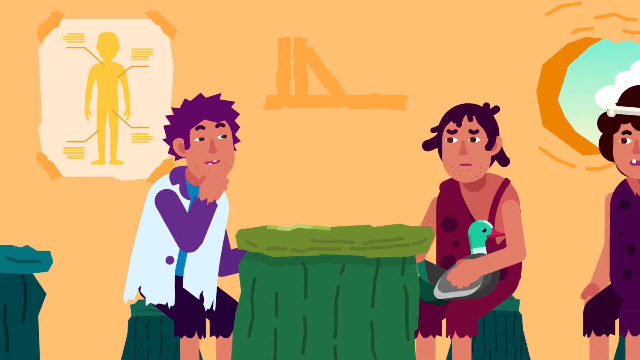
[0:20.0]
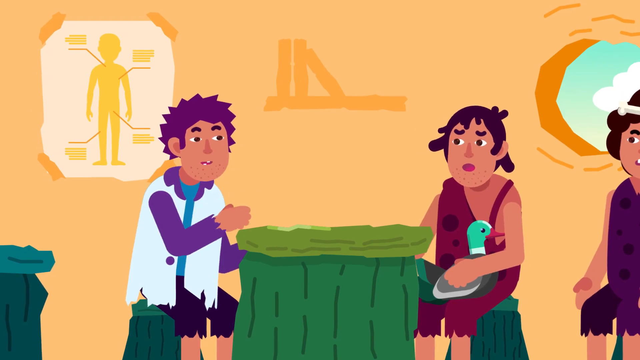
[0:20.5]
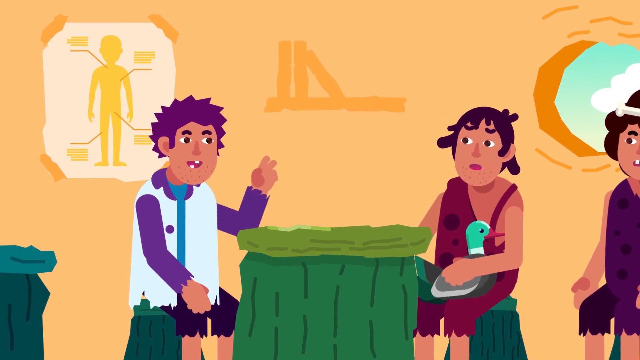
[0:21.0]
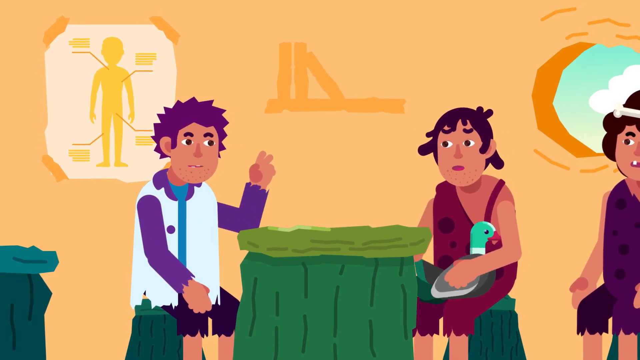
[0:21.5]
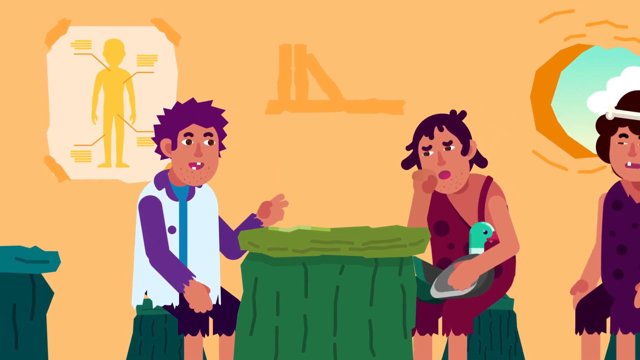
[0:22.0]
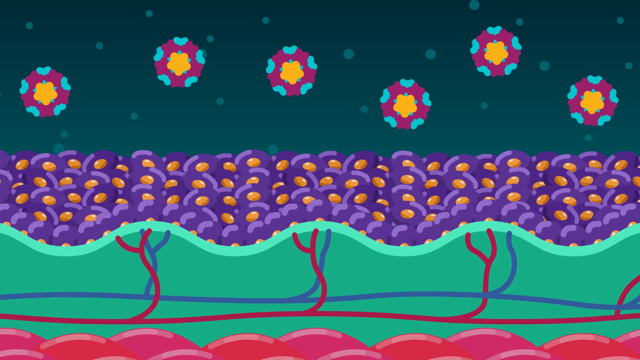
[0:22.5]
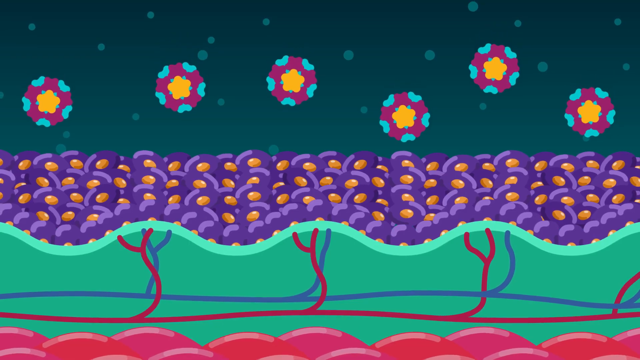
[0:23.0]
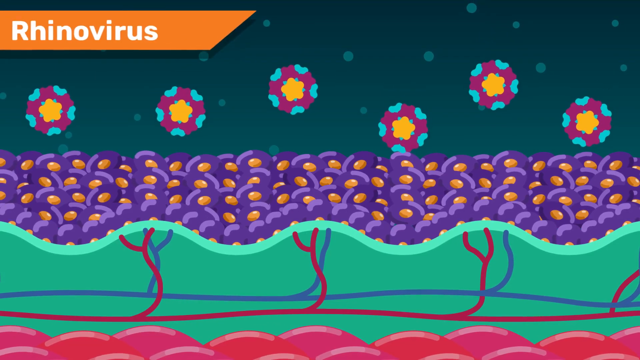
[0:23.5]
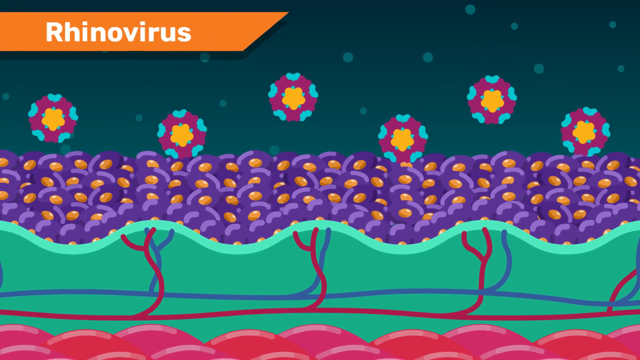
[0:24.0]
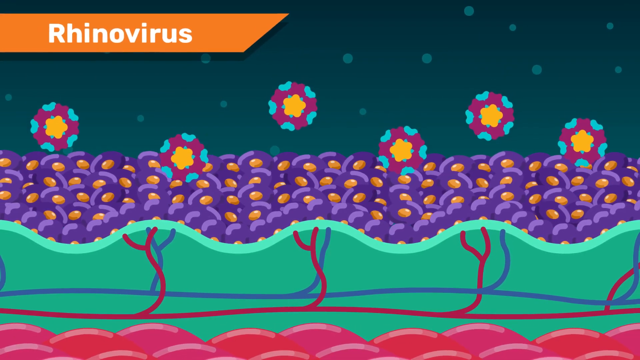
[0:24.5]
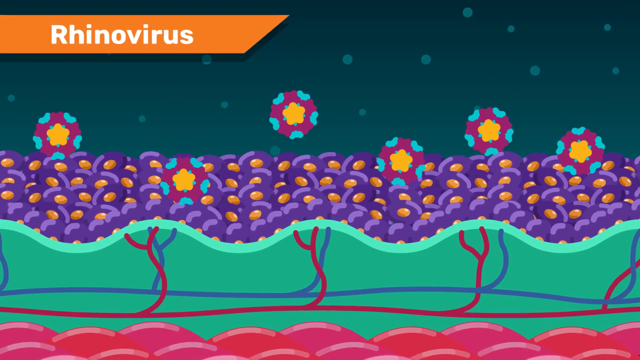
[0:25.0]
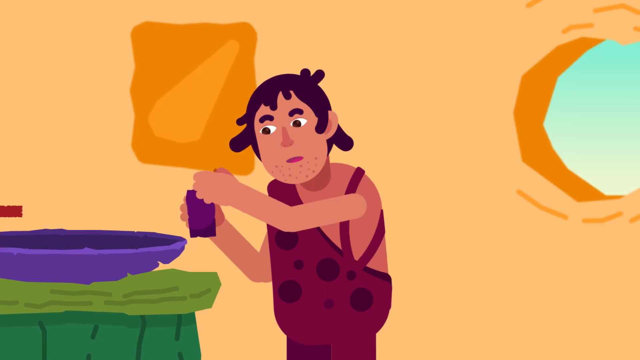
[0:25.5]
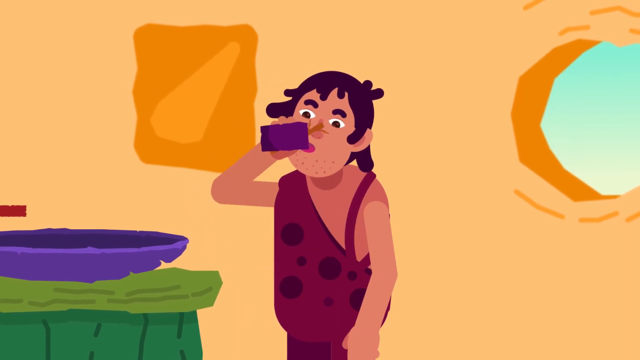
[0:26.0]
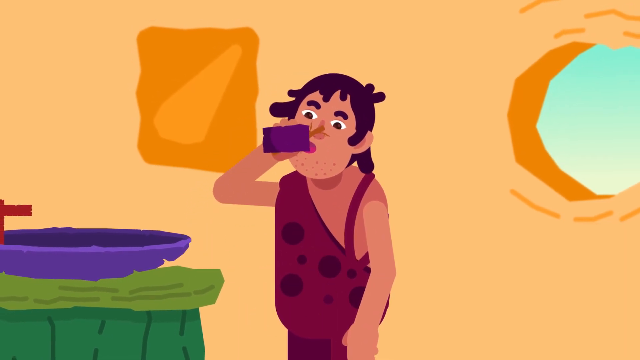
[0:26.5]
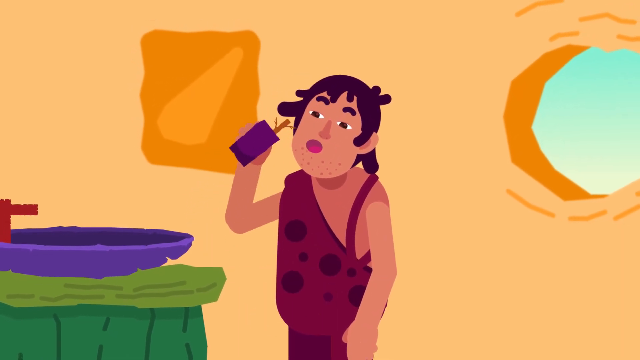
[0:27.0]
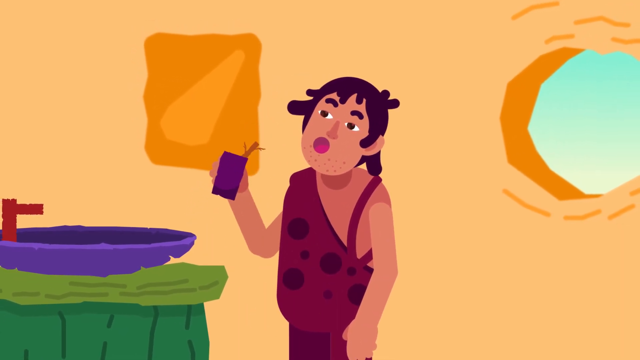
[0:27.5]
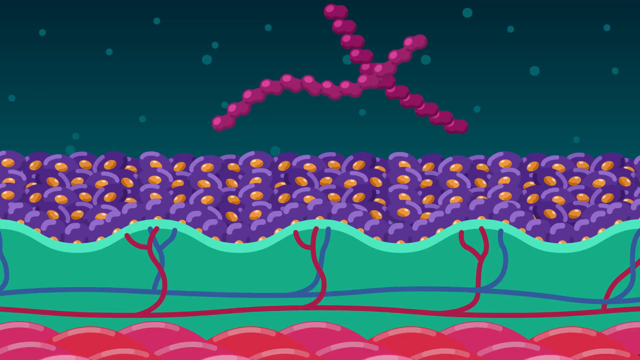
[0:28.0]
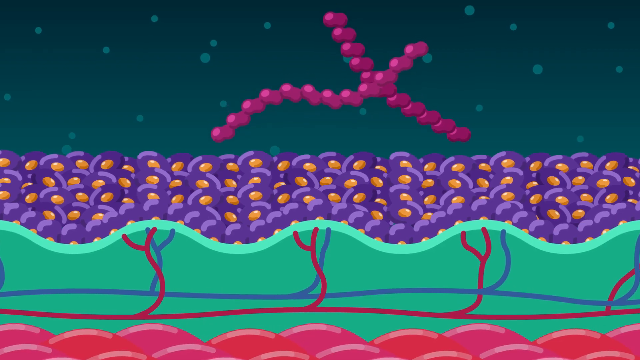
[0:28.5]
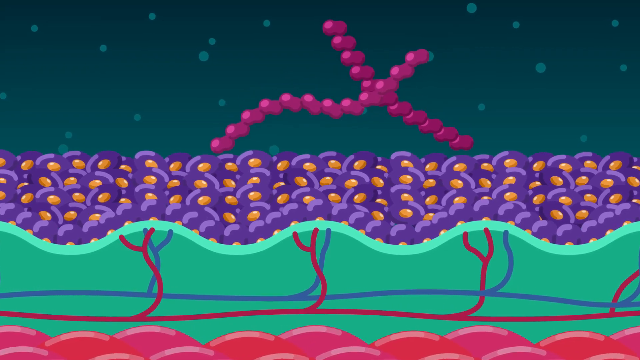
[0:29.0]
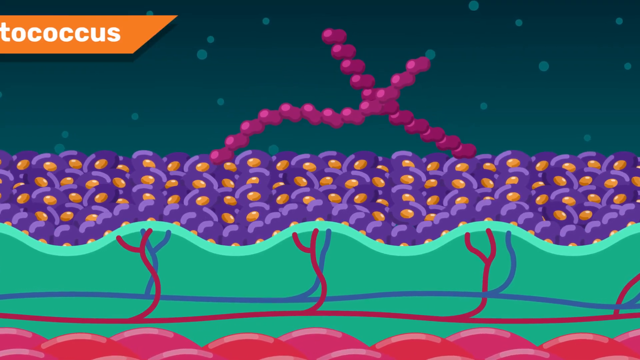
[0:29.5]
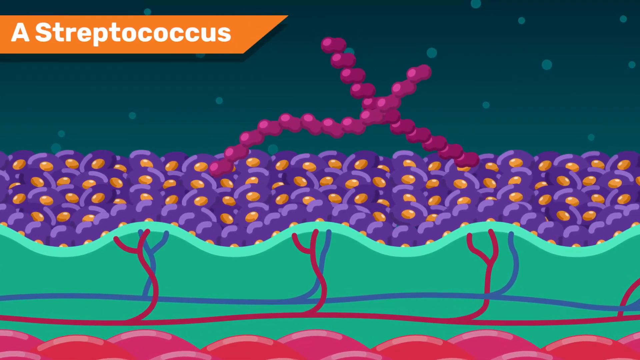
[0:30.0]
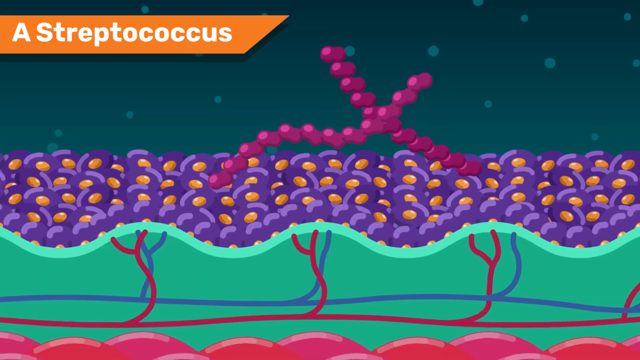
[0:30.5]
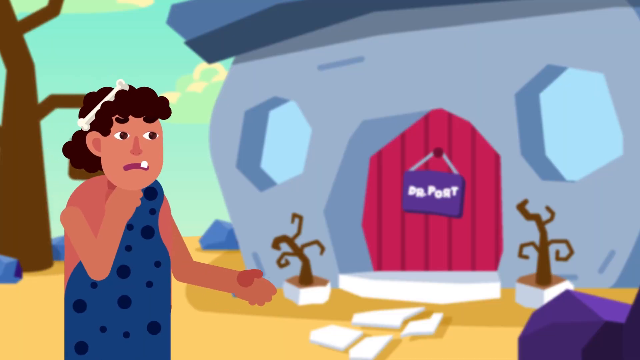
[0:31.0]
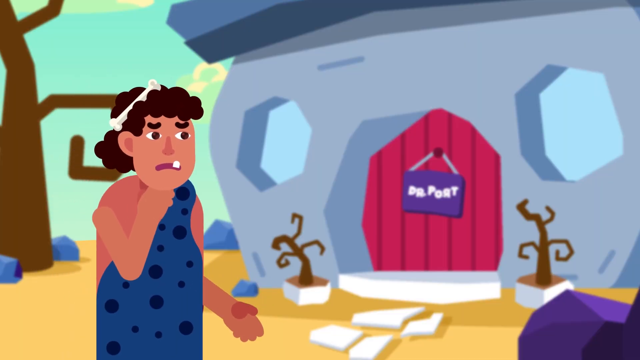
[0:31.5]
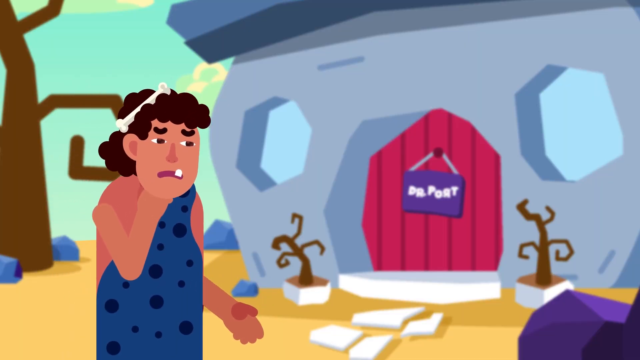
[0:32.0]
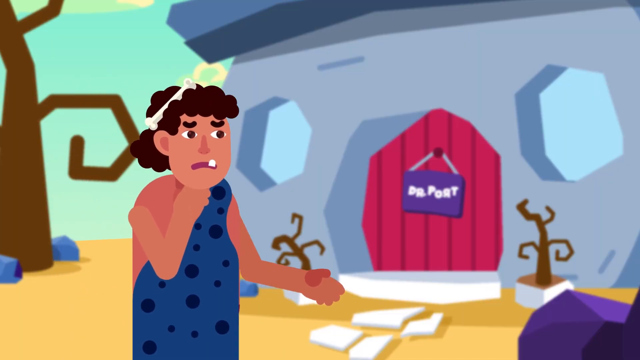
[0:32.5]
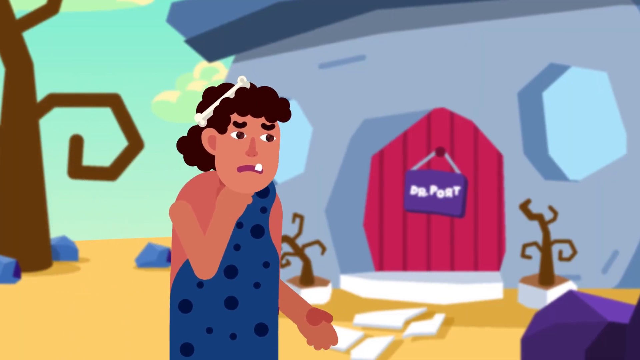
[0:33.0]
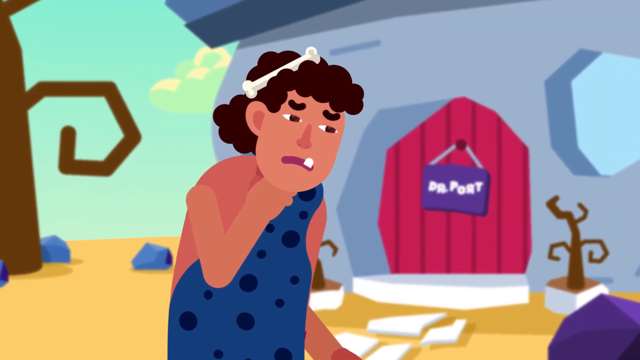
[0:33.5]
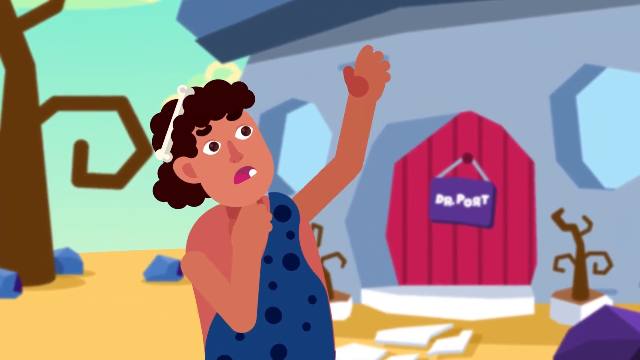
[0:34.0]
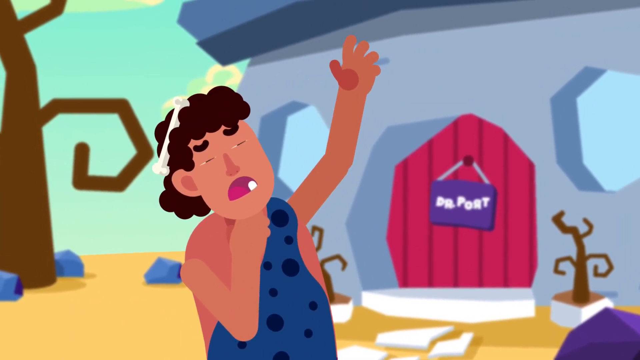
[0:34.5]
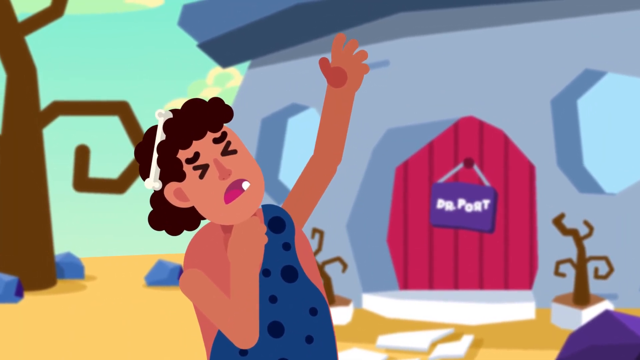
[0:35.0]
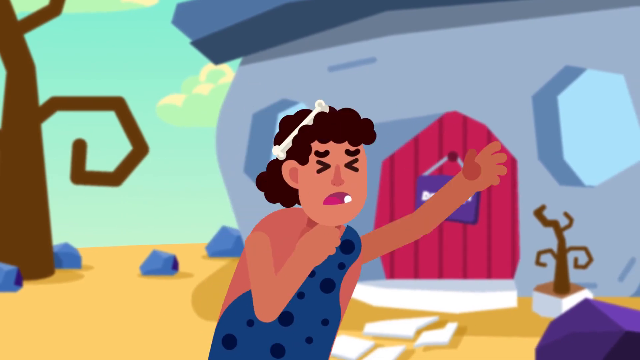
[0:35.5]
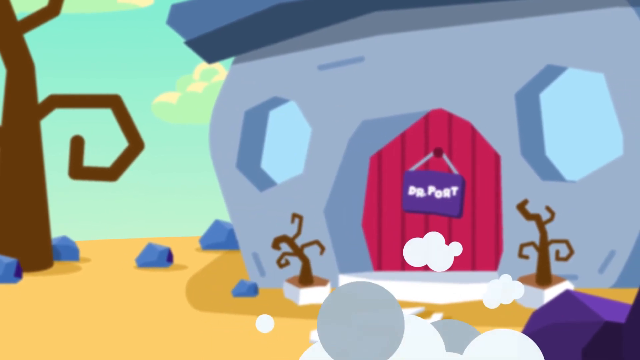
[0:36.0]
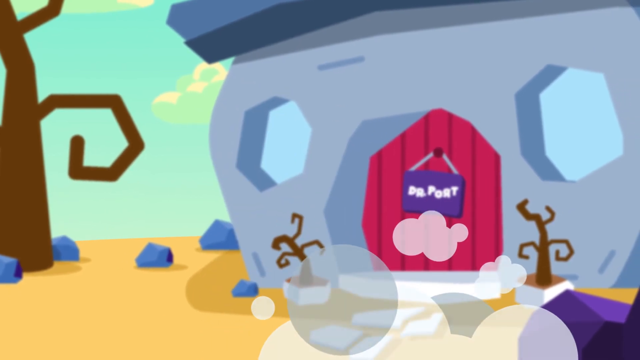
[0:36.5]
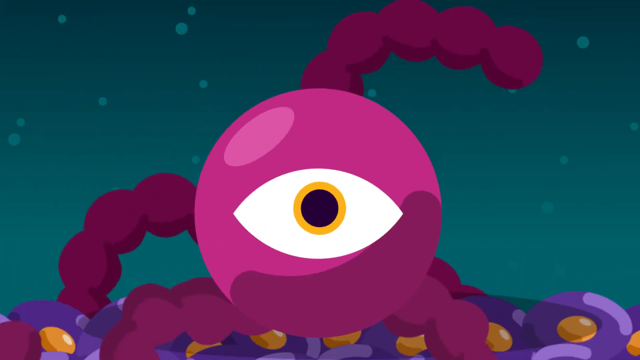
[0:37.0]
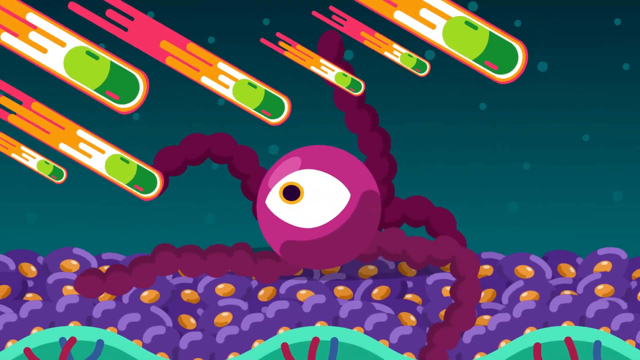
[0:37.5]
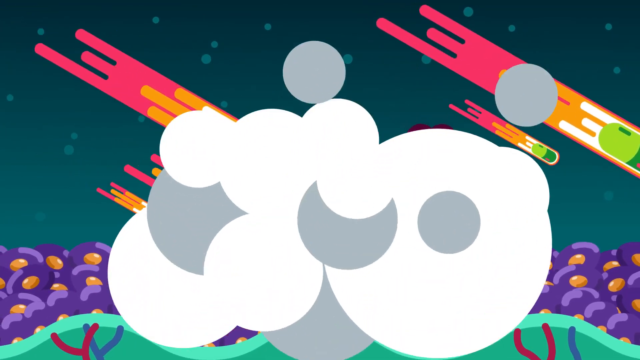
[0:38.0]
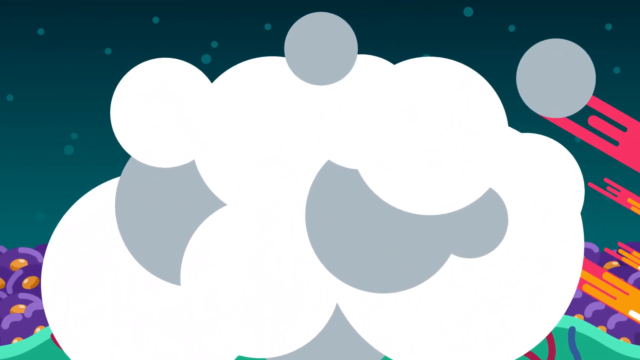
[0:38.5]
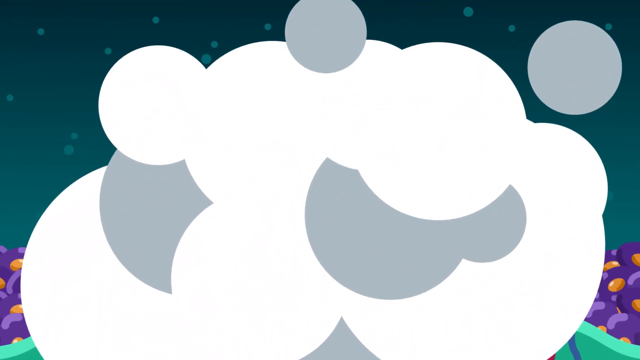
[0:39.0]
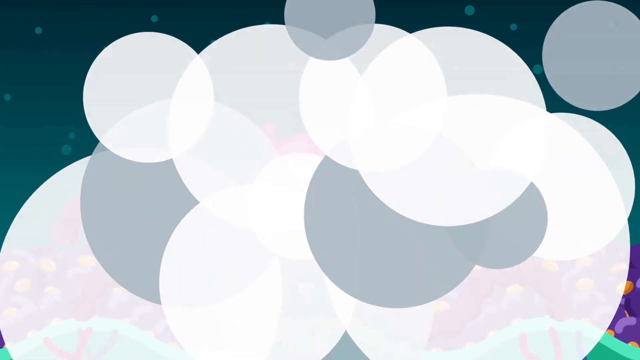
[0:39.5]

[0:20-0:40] Two people talk at the table in the waiting room. The person holding the duck appears to be coughing and getting quite sick. An animation then shows what looks like a virus trying to enter the human body or cells, and a banner appears at the top of the screen with white text reading "rhinovirus." The video returns to a person drinking water from a faucet, with a new animation of streptococcus going through the cell. Another person then walks toward the doctor's office doors but collapses on the ground before entering; they seem to be choking or having trouble breathing, holding their throat before they fall. Finally, a short animation shows what looks to be an attack on the virus. The virus appears to be presented as a monster with one eye and large tentacle-like arms.